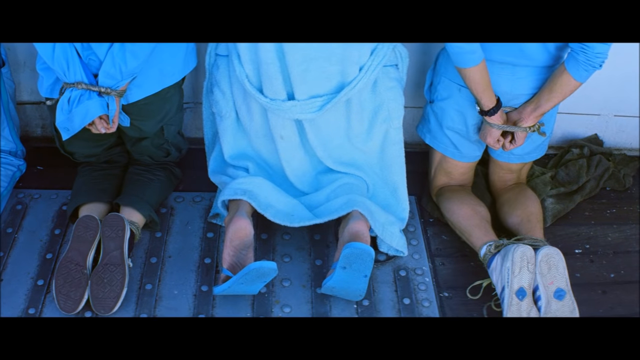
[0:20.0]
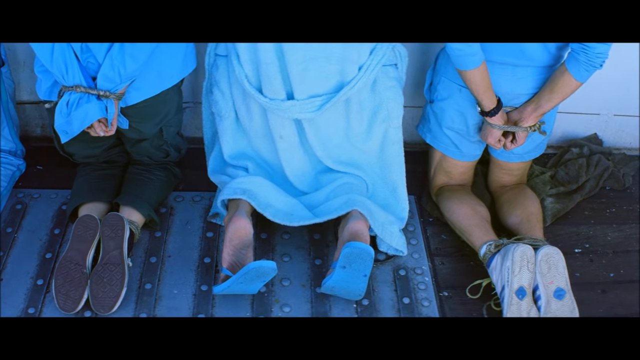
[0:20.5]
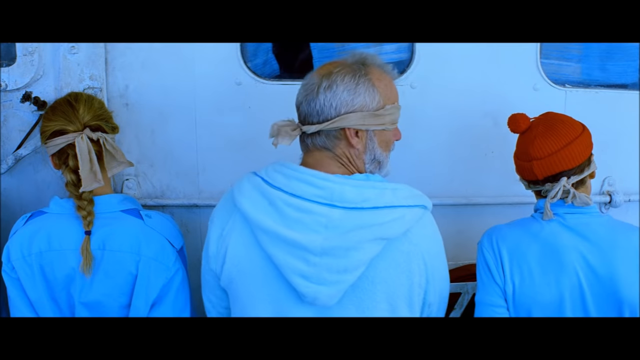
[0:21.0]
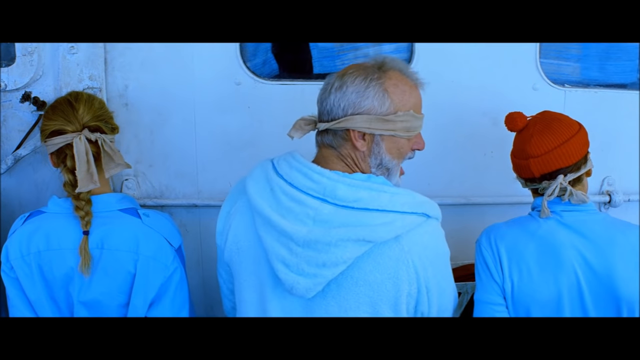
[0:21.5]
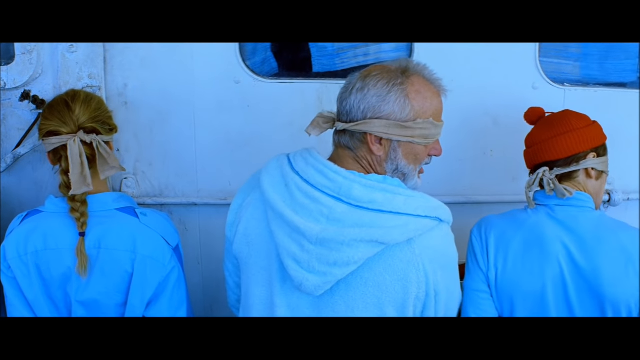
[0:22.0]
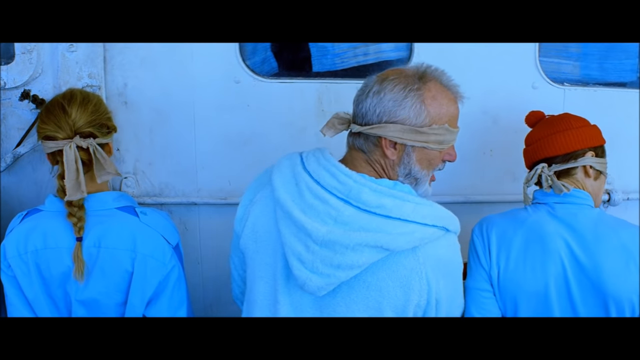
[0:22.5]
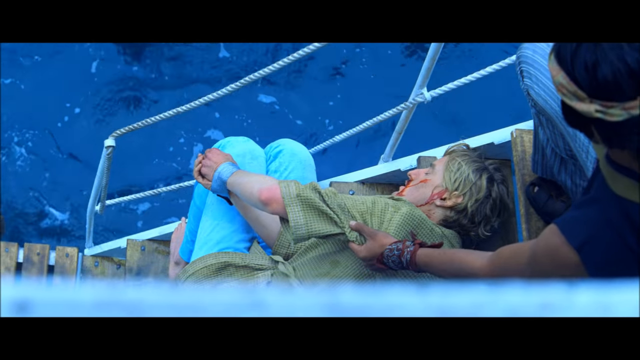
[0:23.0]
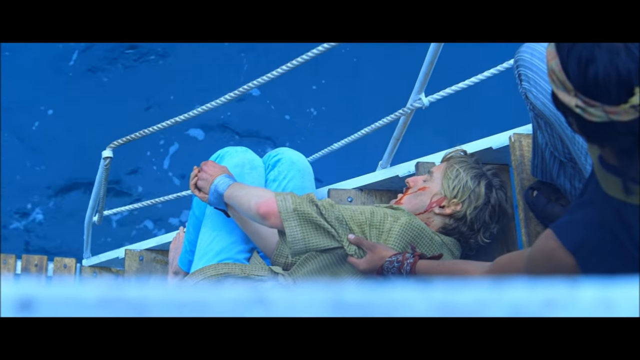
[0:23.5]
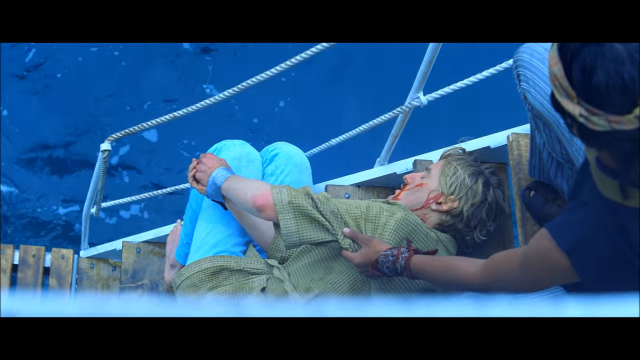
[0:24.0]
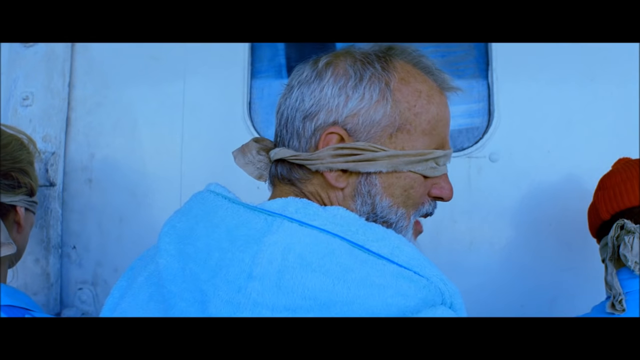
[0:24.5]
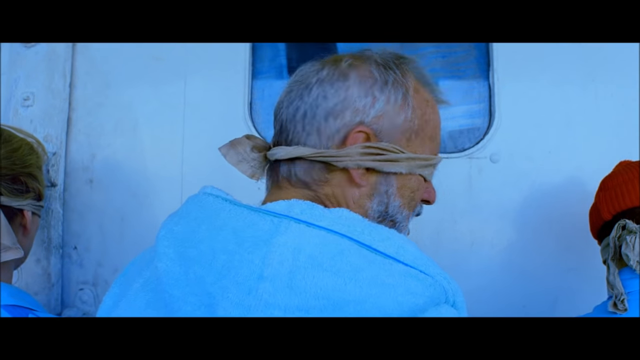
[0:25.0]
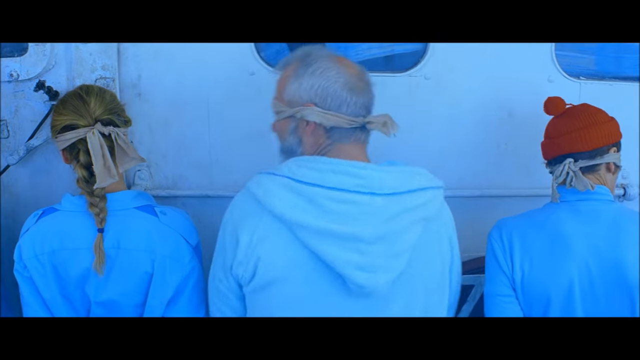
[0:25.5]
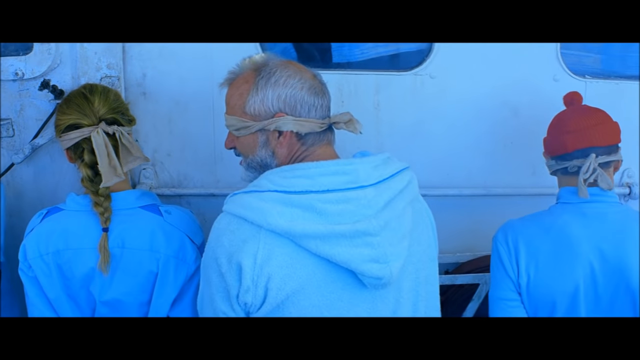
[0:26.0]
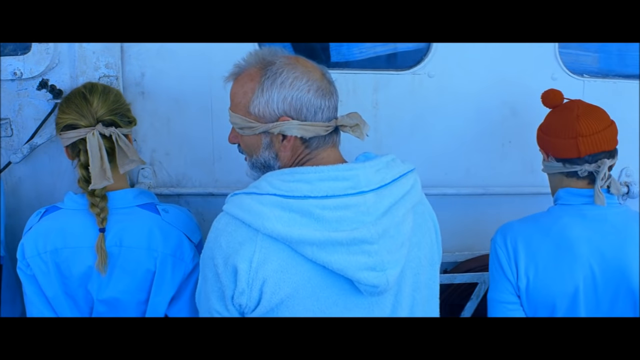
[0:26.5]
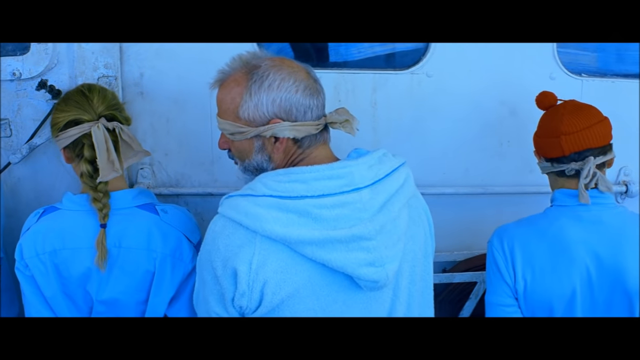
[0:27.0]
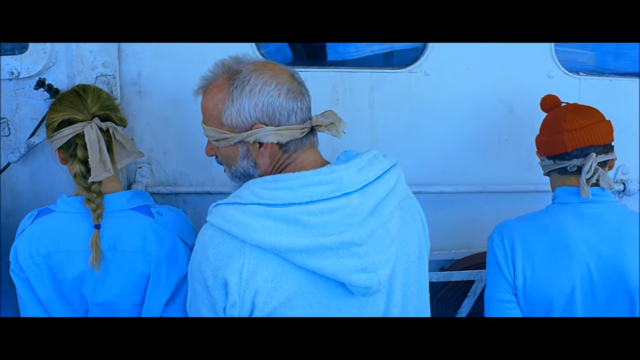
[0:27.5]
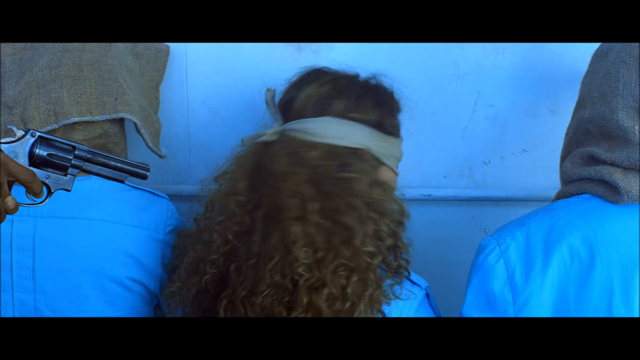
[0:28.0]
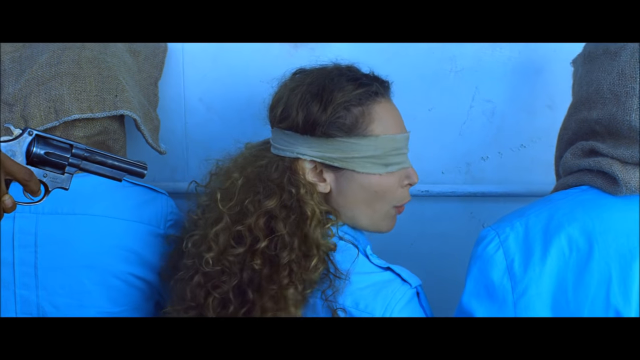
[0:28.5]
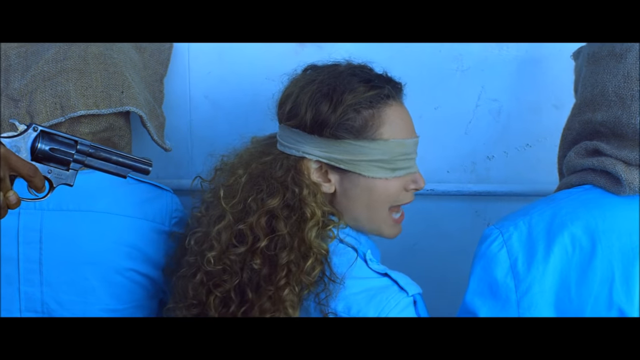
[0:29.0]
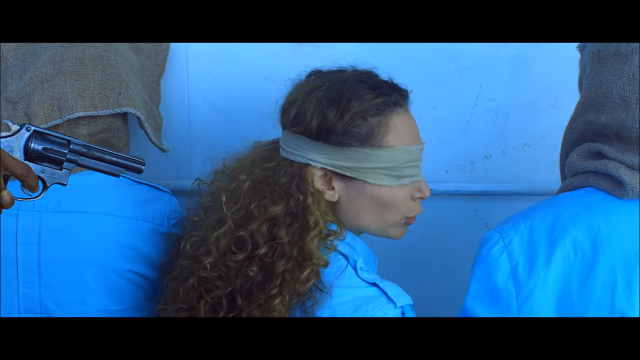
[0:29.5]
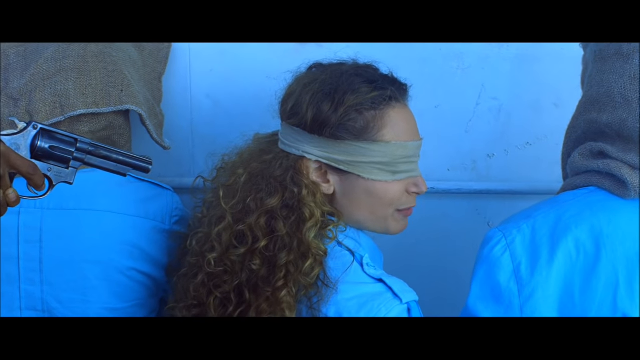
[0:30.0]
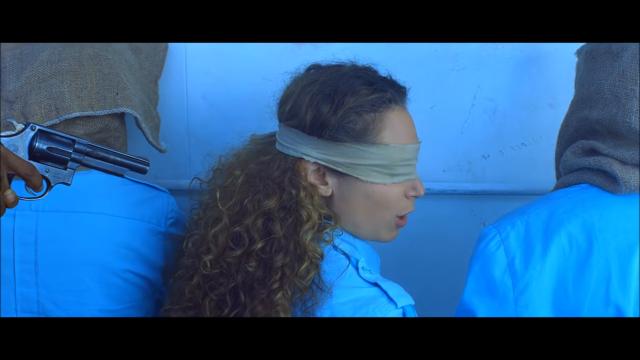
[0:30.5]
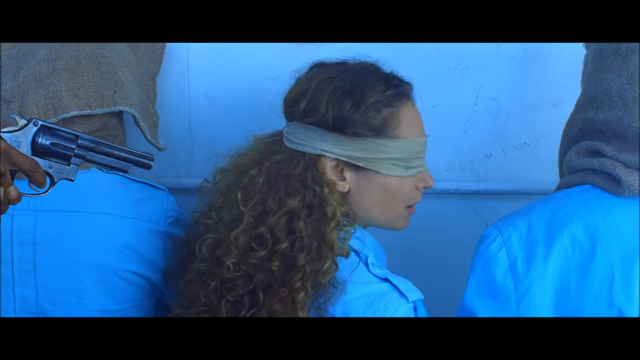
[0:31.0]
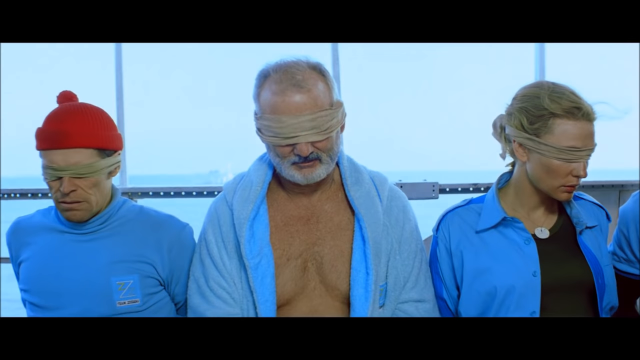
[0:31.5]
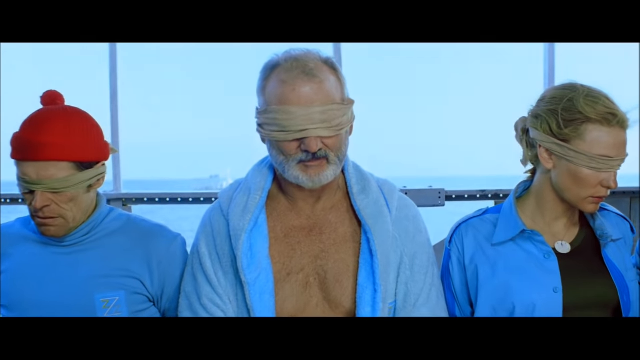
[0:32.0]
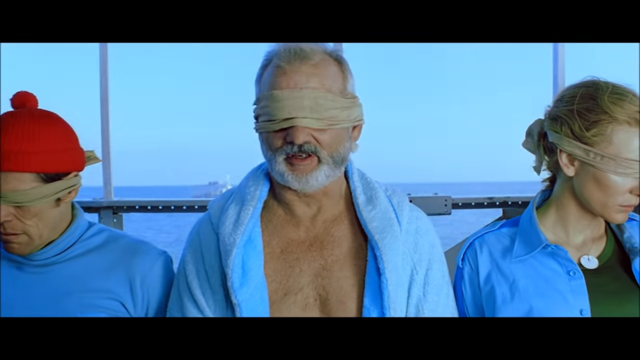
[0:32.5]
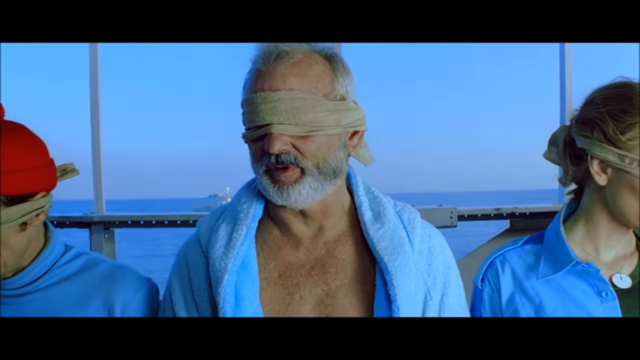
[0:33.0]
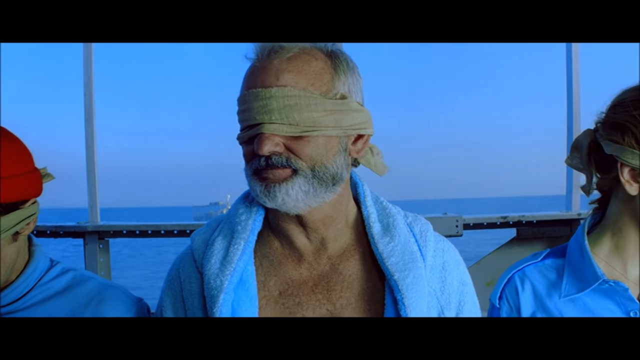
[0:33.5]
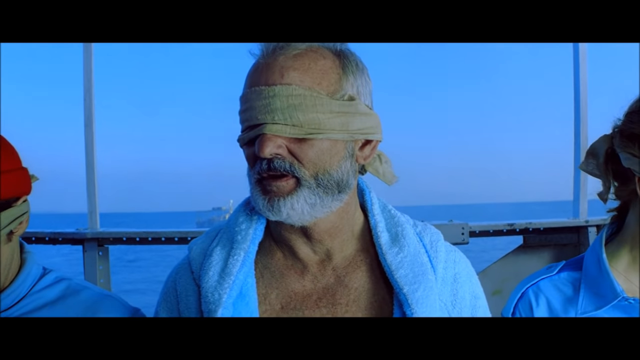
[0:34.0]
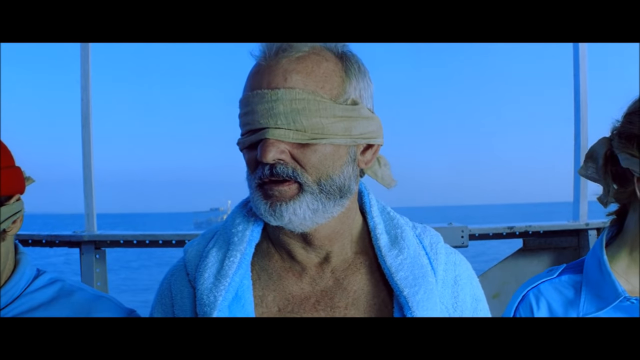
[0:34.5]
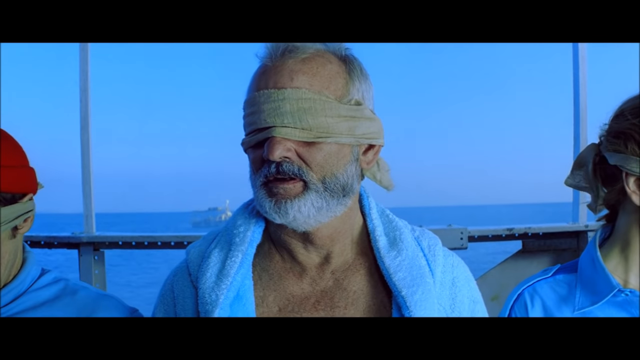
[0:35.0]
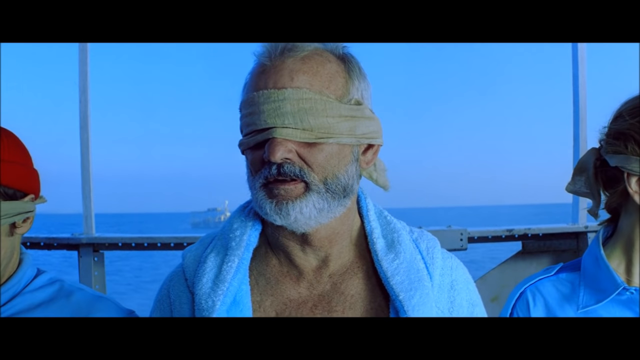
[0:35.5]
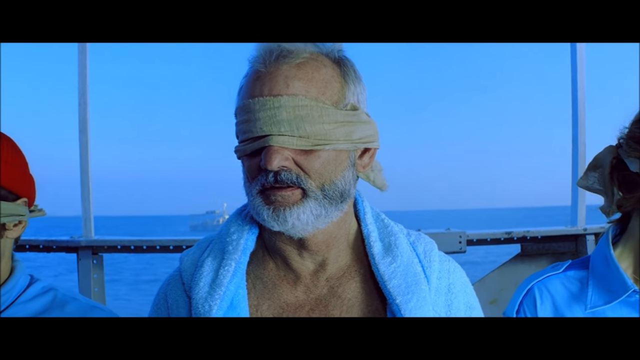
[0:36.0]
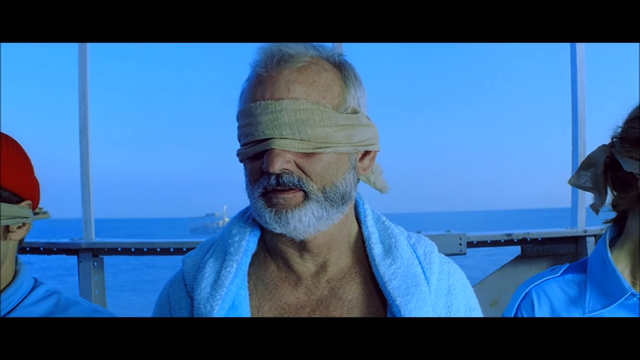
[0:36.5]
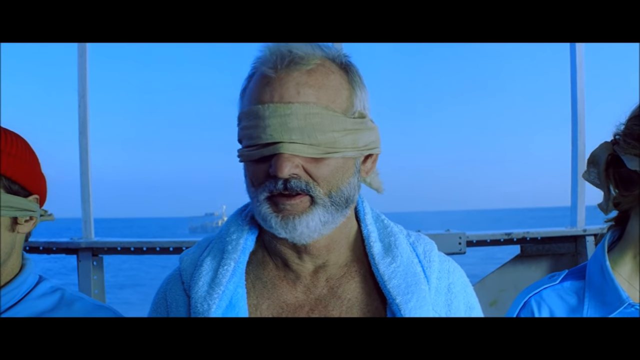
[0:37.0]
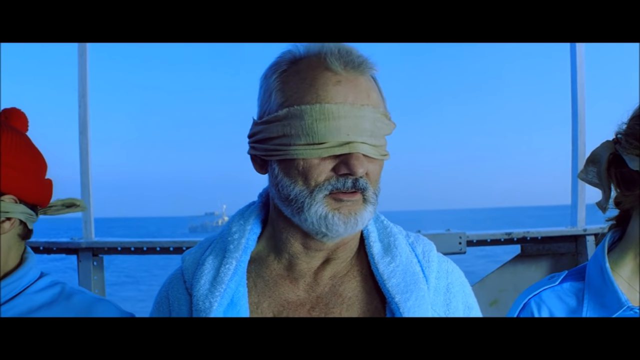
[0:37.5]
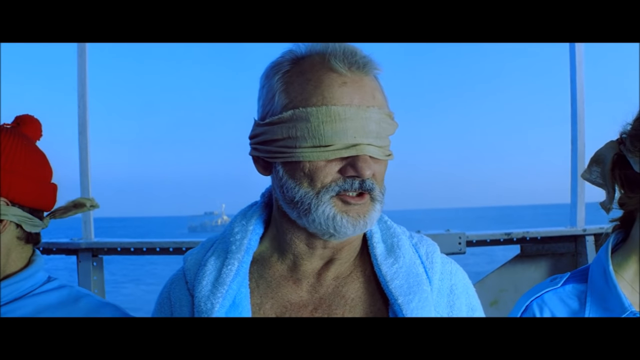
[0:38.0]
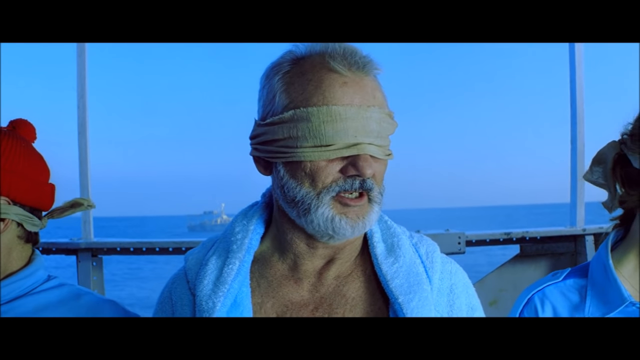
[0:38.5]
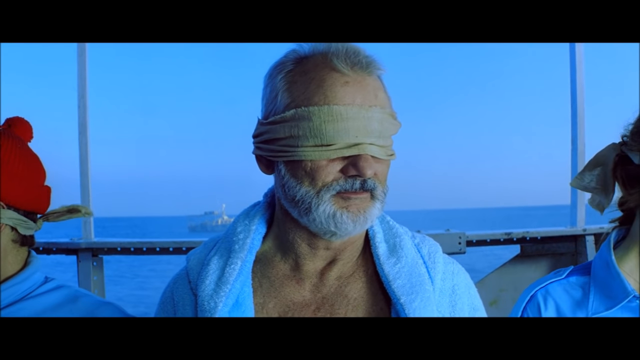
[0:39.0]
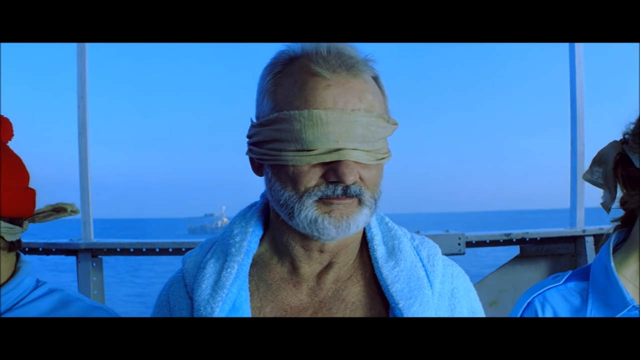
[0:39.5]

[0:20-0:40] Three people are kneeling. Bill Murray is in the middle with his eyes covered by a cloth; to his left is a blonde woman with her hair in a single braid, also with her eyes covered by a cloth; and to his right is a man in a red beanie, his eyes also covered by a cloth. The footage cuts to a blonde man who is tied up and seems to be bloody on the stairs of the boat, while Bill Murray keeps speaking to more members of the crew, who are all tied up; some of them have bags over their heads. When the camera shows their faces, the woman next to Bill Murray is revealed to be Cate Blanchett, and the man in the red beanie next to him is Willem Dafoe.